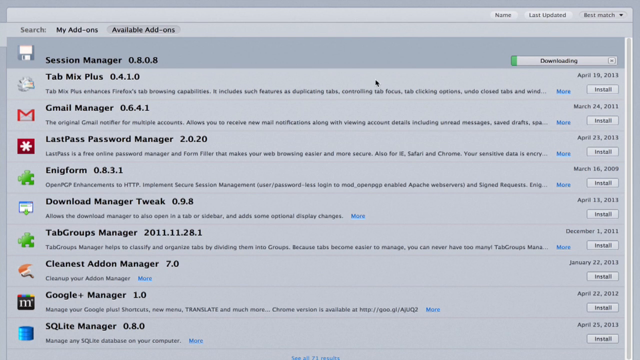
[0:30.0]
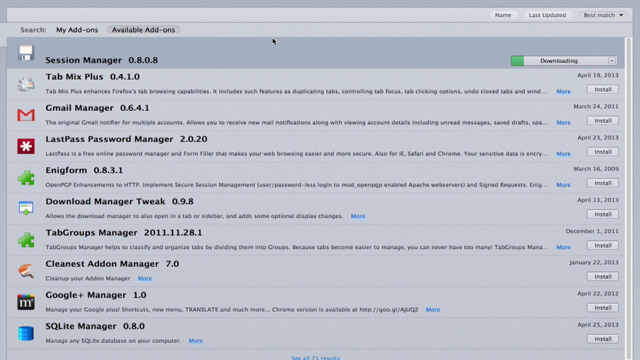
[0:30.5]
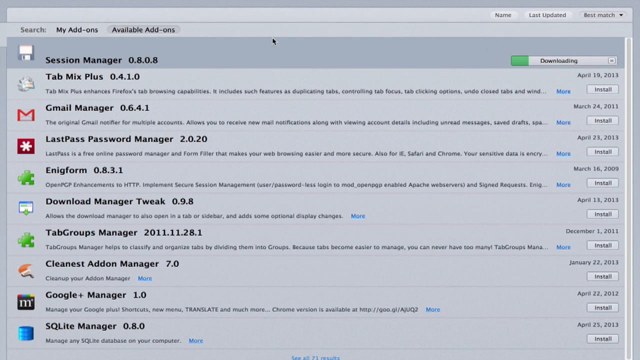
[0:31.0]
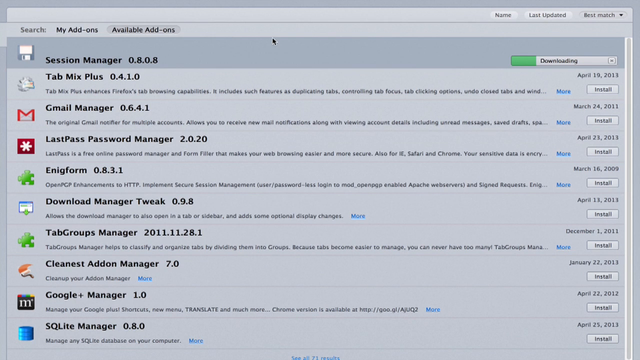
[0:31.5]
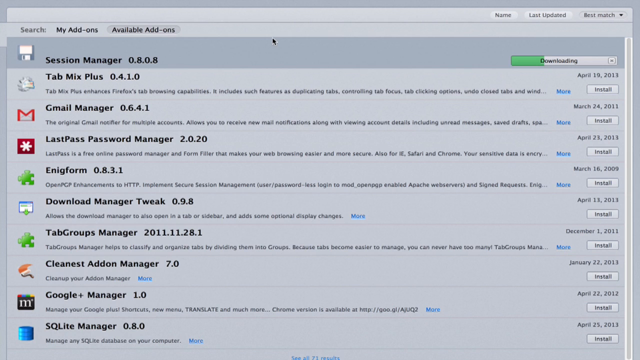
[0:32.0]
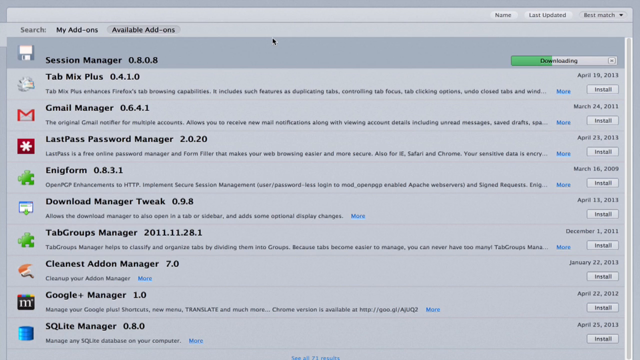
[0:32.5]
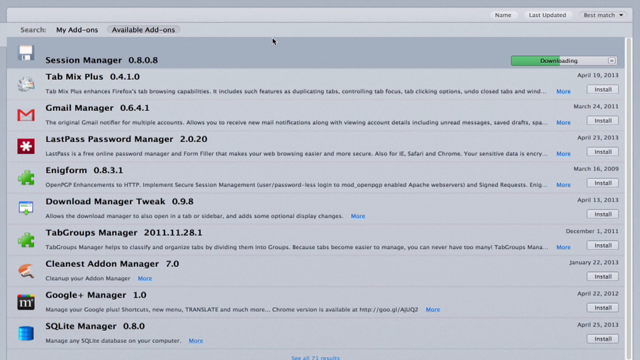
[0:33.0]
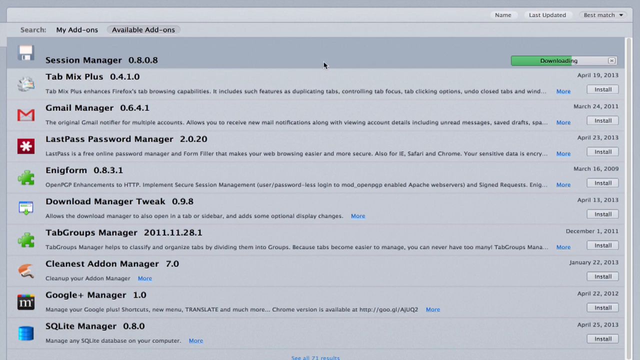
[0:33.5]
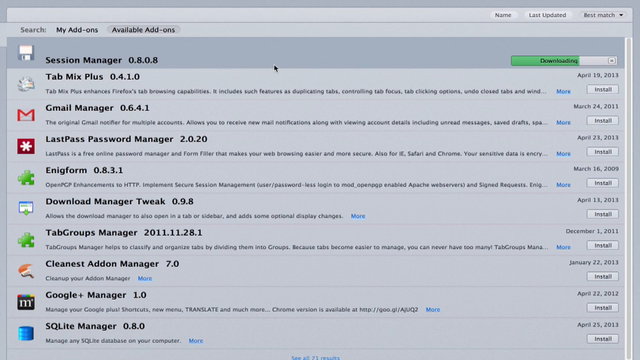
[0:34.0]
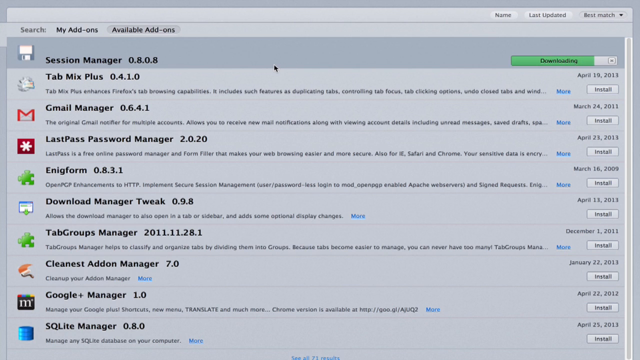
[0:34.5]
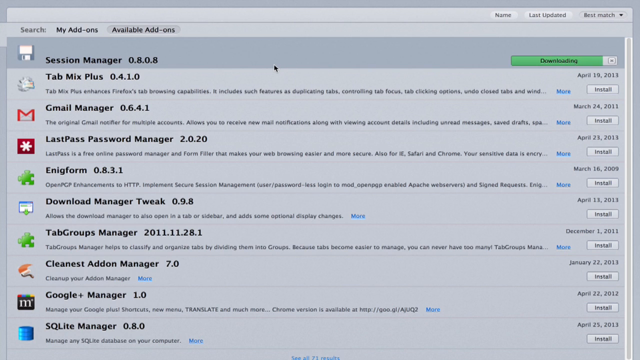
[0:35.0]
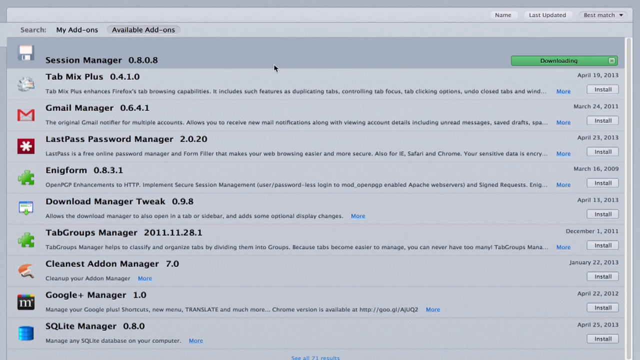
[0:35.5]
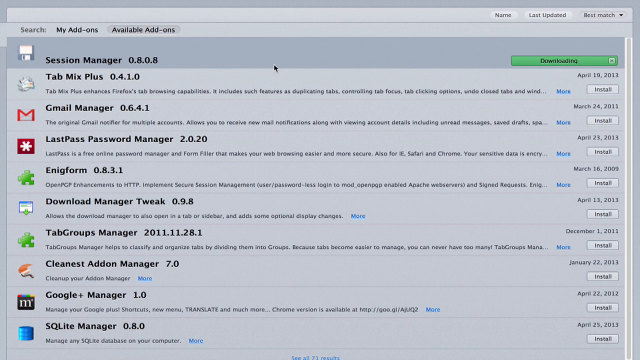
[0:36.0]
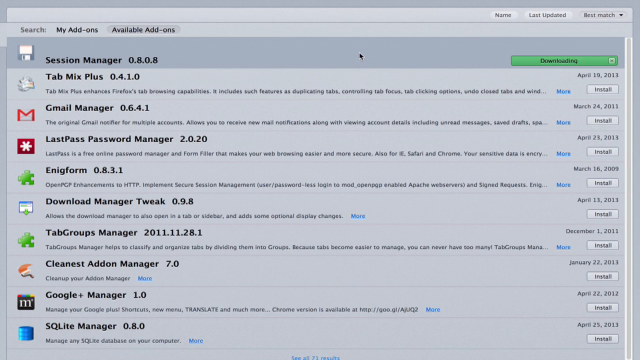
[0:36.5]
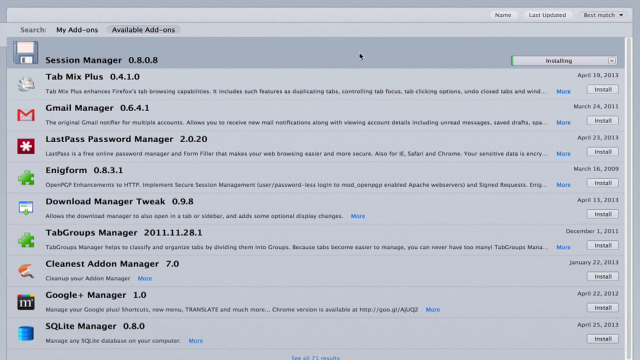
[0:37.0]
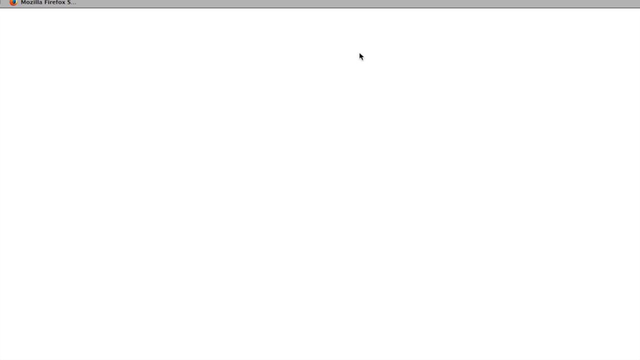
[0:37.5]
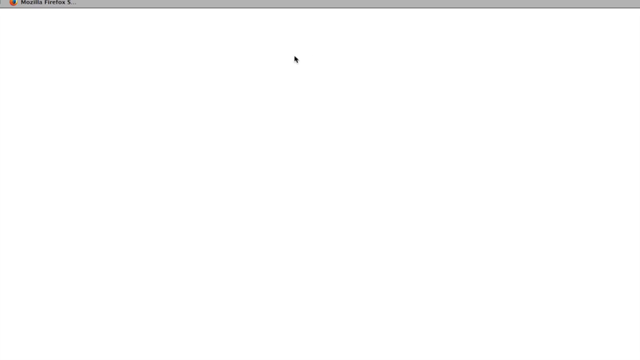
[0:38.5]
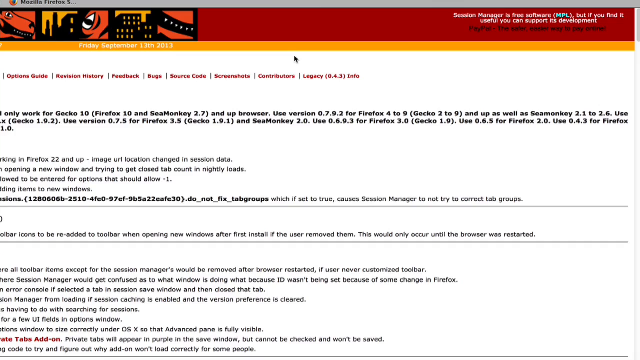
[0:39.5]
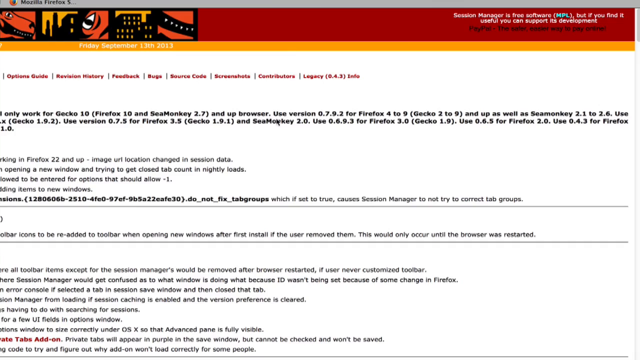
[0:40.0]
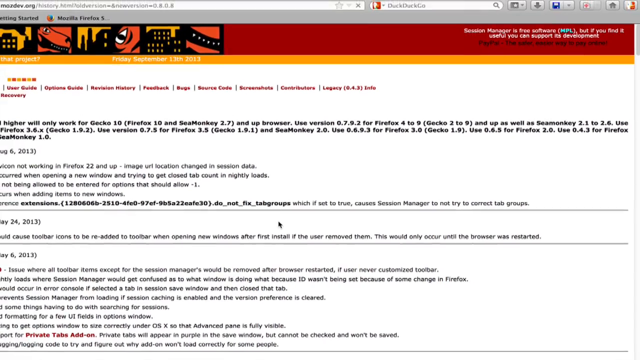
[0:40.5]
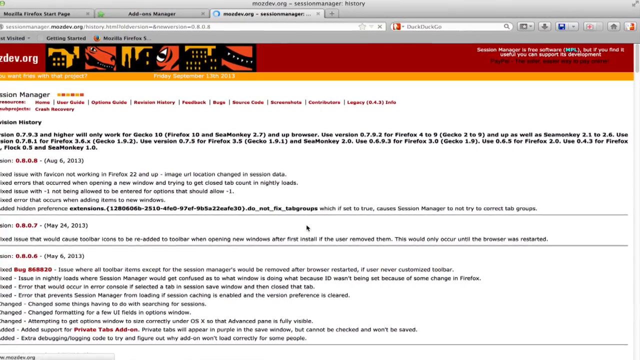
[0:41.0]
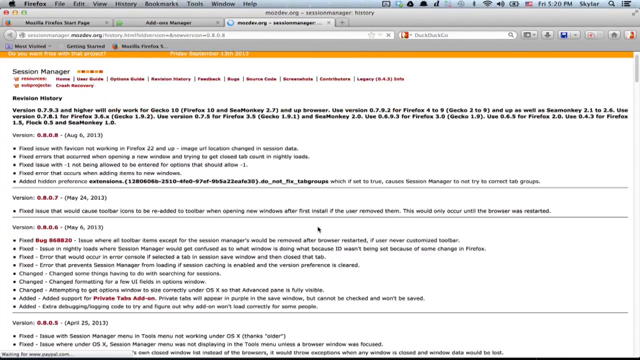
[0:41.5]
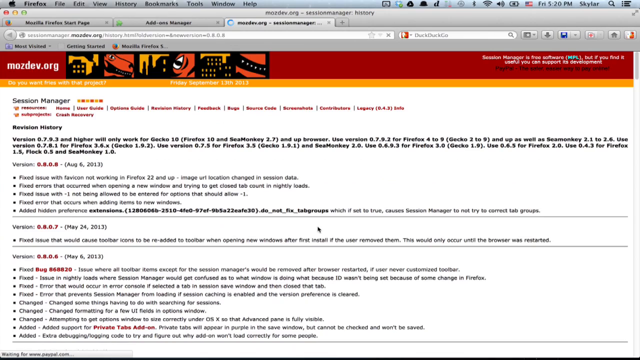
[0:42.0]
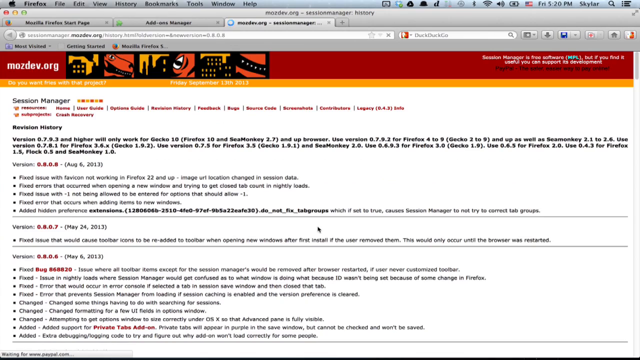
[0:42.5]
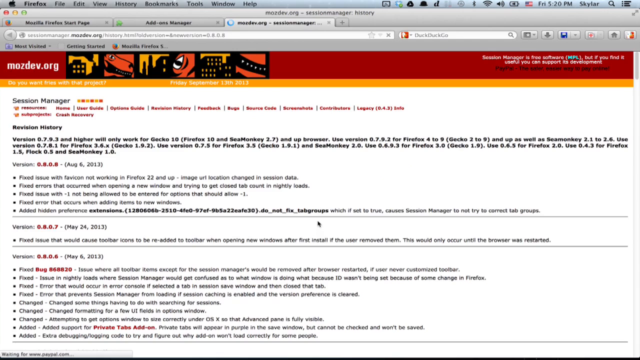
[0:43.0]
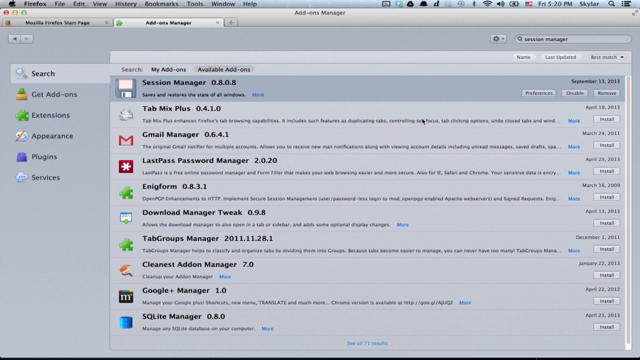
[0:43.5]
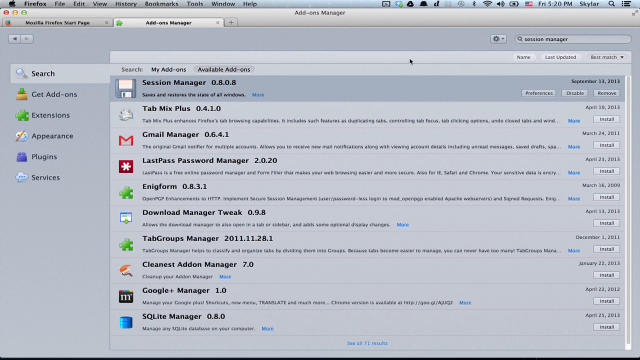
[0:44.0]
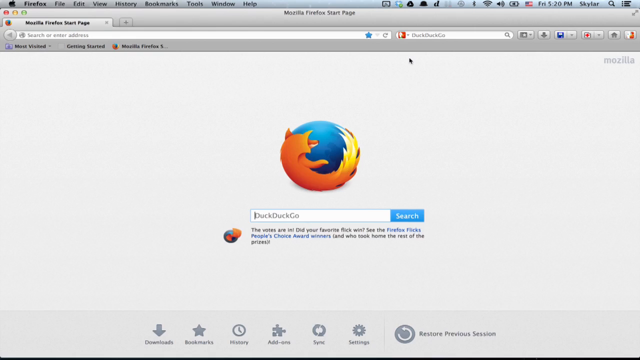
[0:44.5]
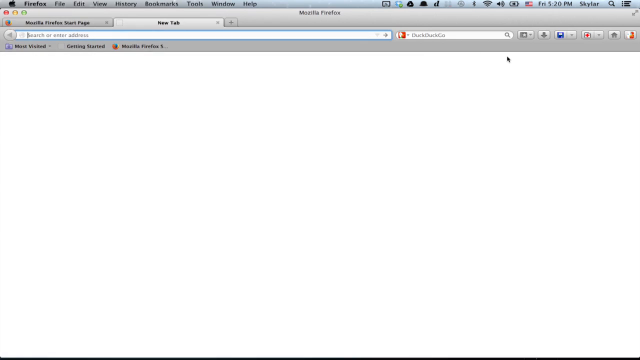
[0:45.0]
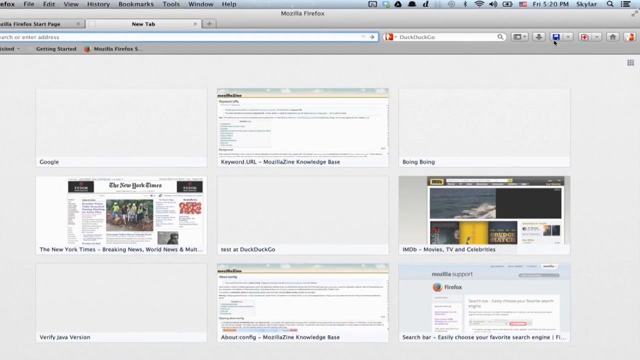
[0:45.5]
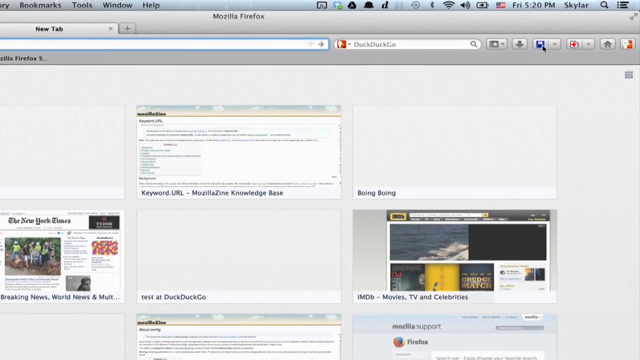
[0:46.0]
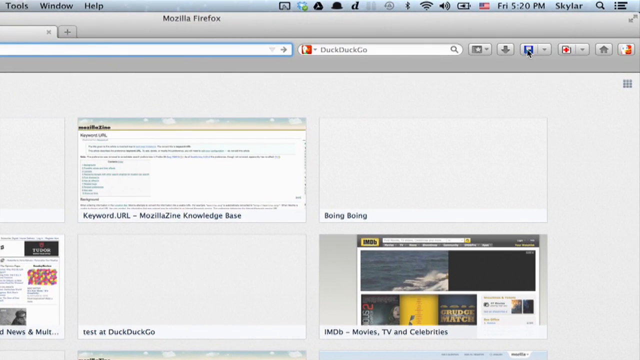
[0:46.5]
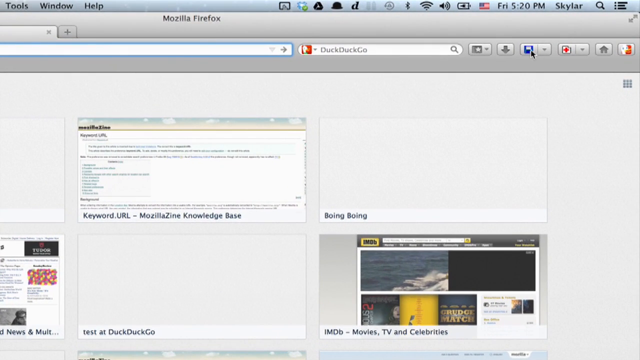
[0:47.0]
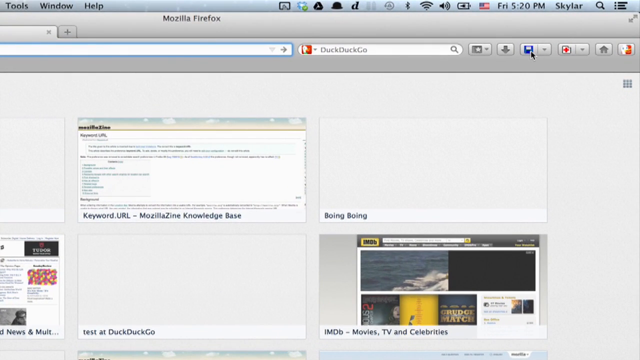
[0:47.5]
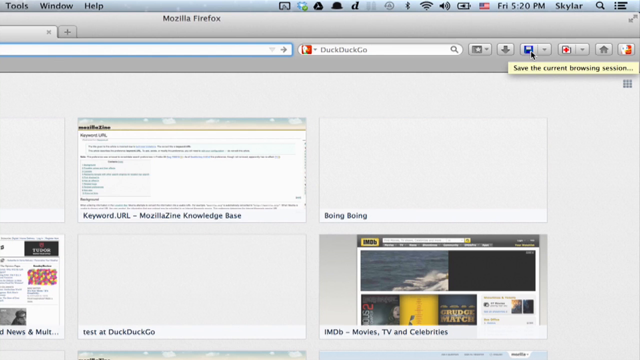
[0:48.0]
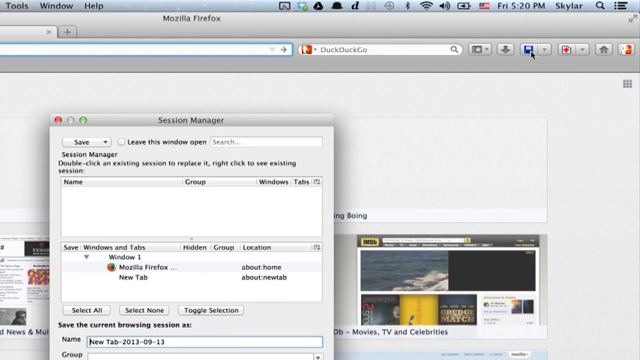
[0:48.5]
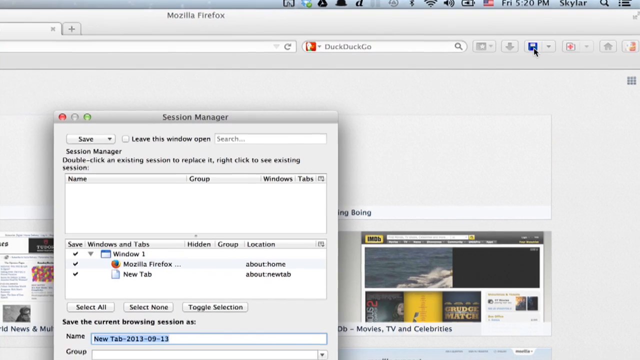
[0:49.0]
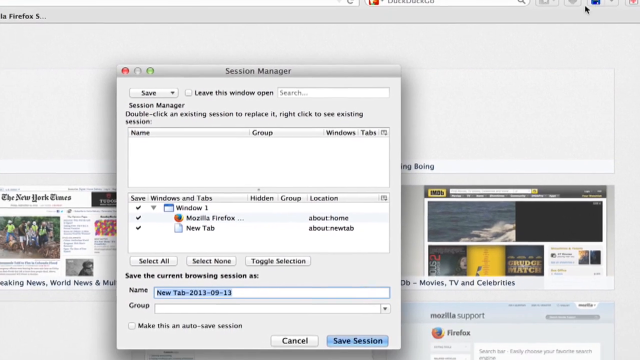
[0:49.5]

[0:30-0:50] The session manager downloads quickly while the cursor moves slightly. Once the green bar fills, an installing progress bar briefly appears before the screen goes white. A new page then loads in the Firefox browser, opening the Session Manager at MozDev.org, apparently showing its update notes. The user closes this page, returning to the second tab with the add-on manager, where the session manager seems to have already installed. They close this tab as well and open a new tab in Mozilla Firefox. The screen recording zooms into the top right, where the action buttons are, including a button that looks like a floppy disk; hovering over it shows the text "save the current browsing session." The cursor moves a little, and clicking the button opens a Session Manager dialog containing a panel that shows the windows and tabs currently open.